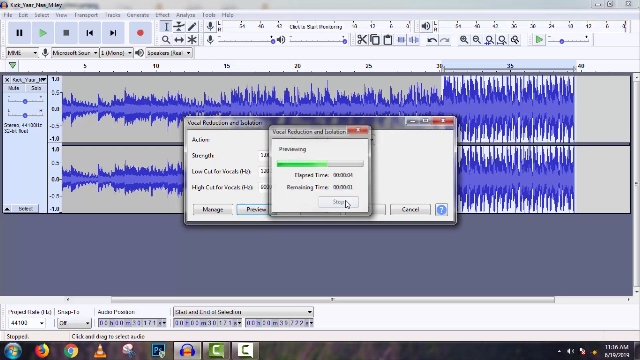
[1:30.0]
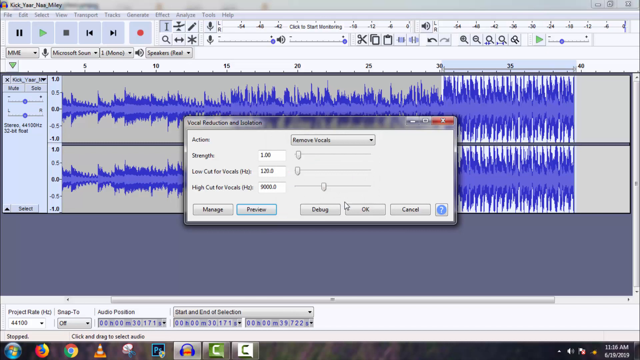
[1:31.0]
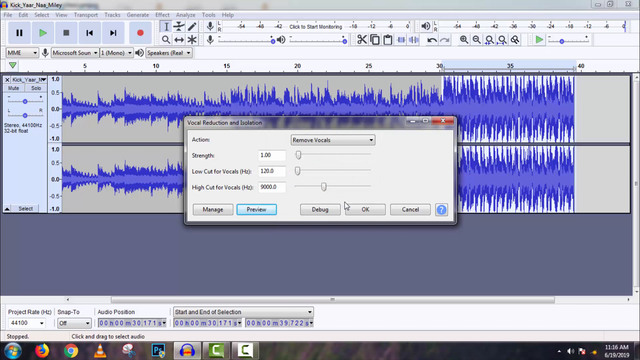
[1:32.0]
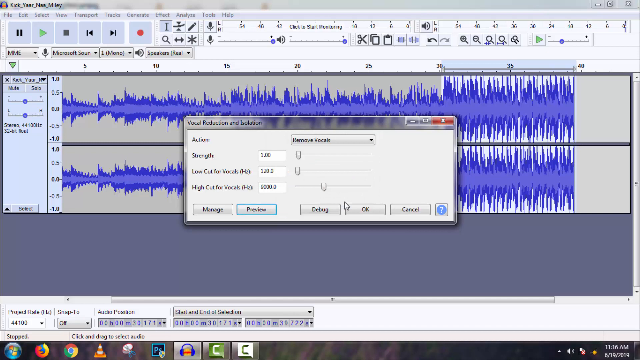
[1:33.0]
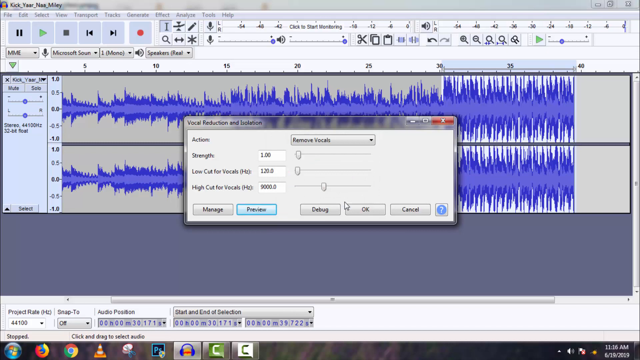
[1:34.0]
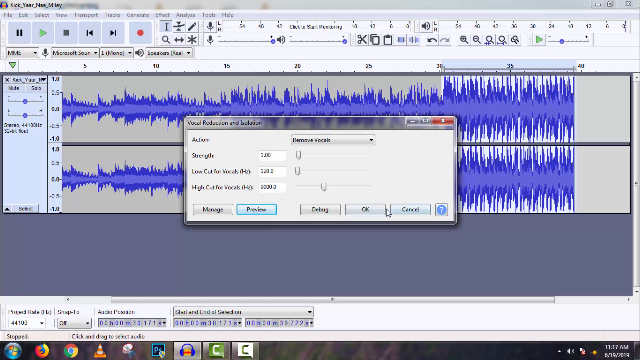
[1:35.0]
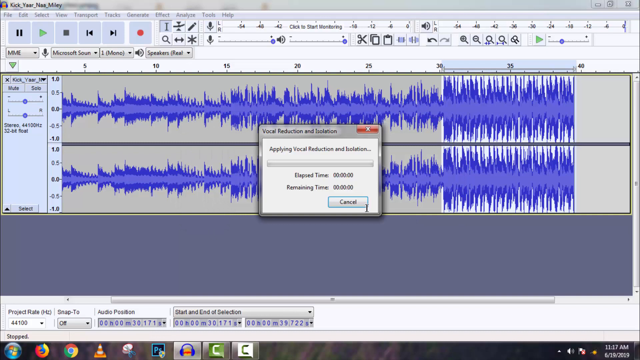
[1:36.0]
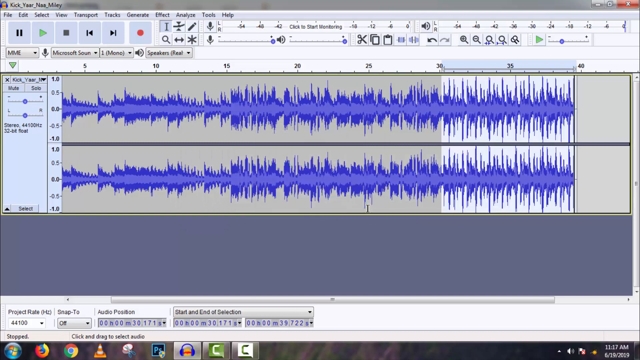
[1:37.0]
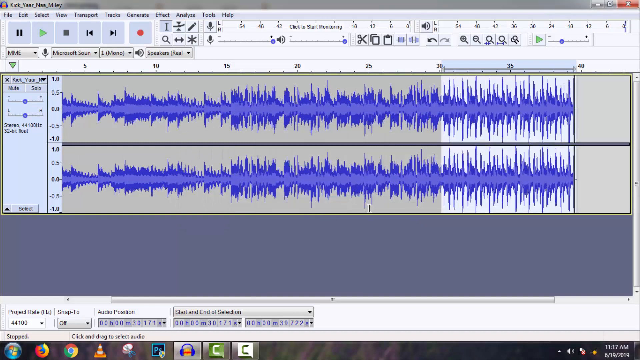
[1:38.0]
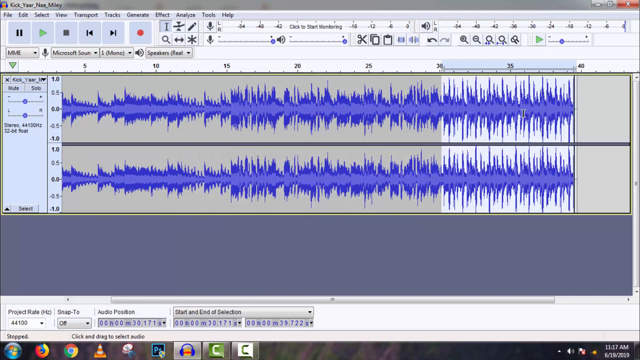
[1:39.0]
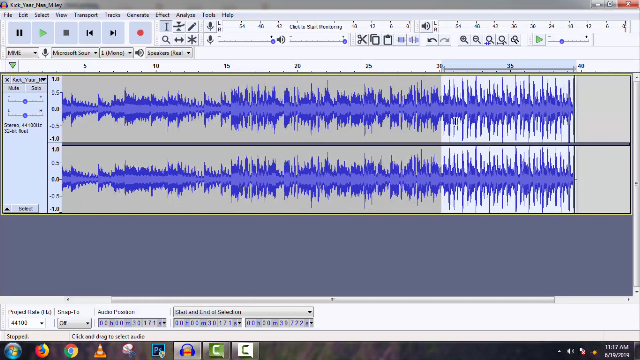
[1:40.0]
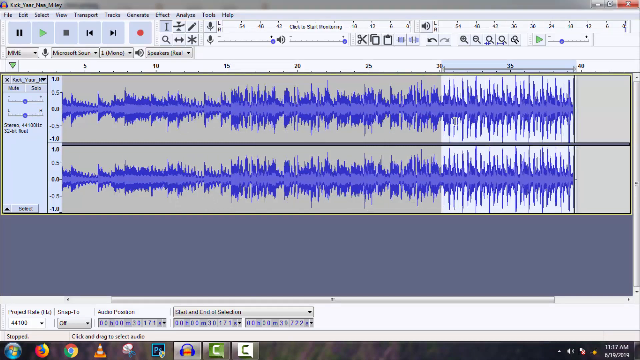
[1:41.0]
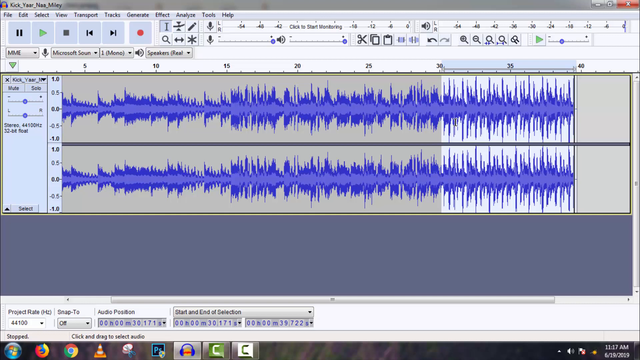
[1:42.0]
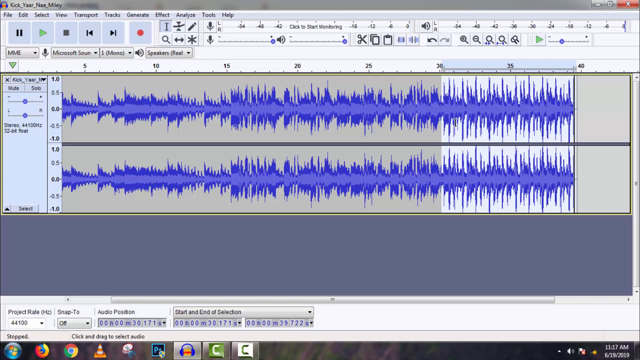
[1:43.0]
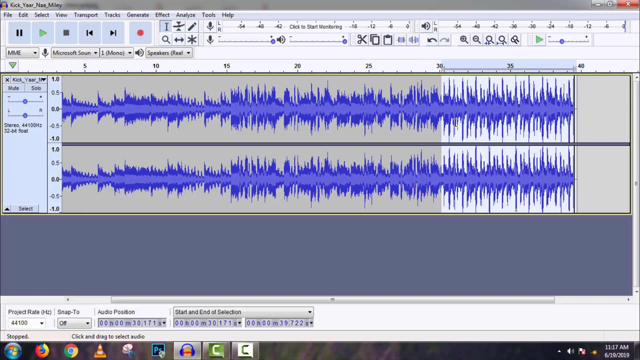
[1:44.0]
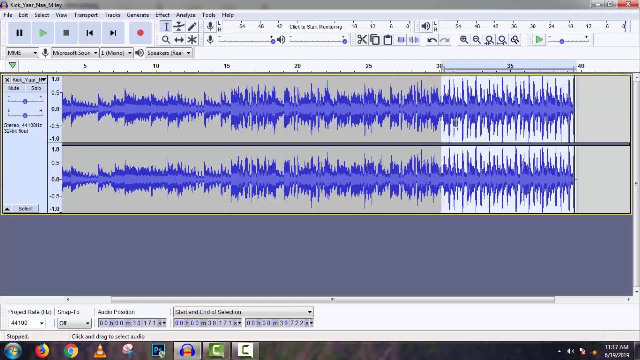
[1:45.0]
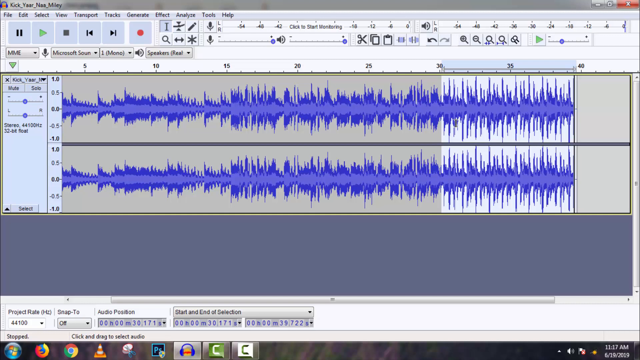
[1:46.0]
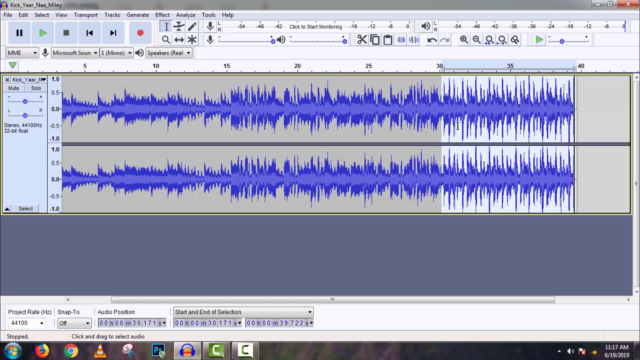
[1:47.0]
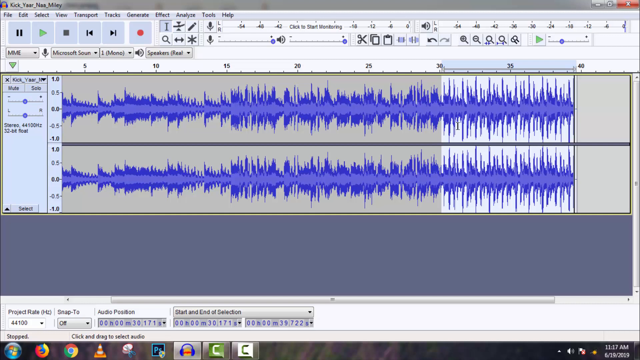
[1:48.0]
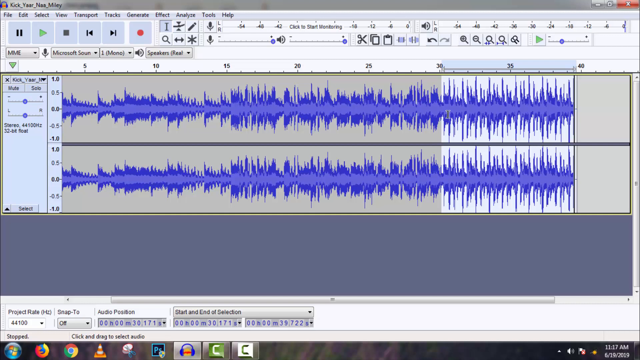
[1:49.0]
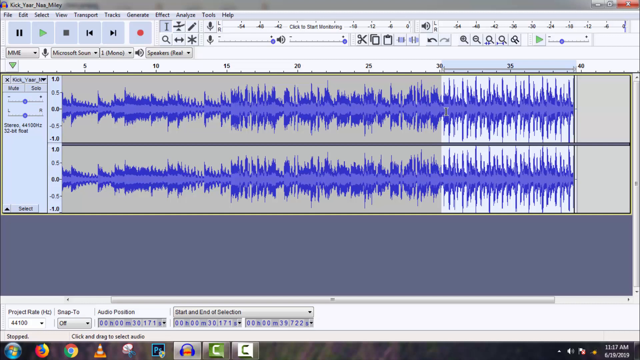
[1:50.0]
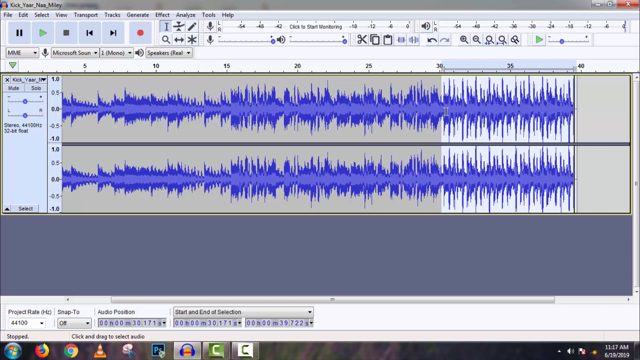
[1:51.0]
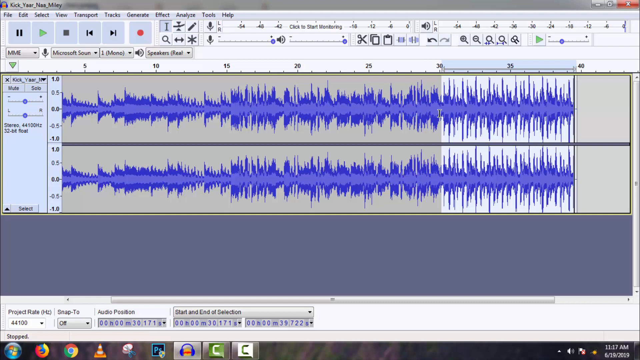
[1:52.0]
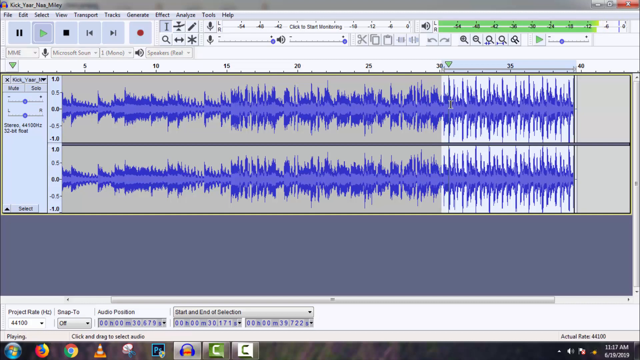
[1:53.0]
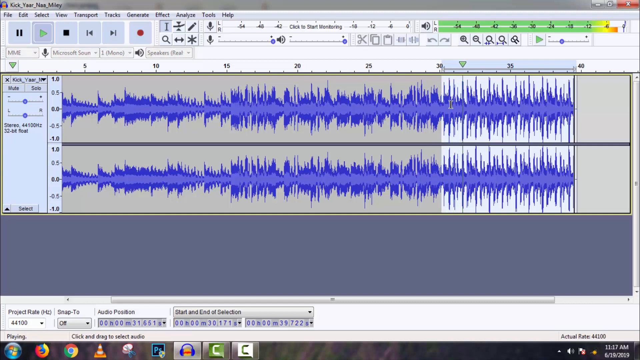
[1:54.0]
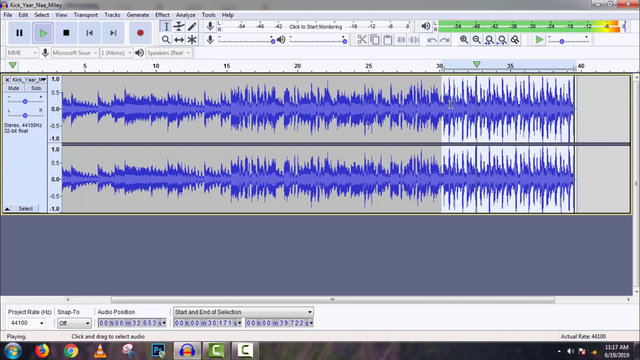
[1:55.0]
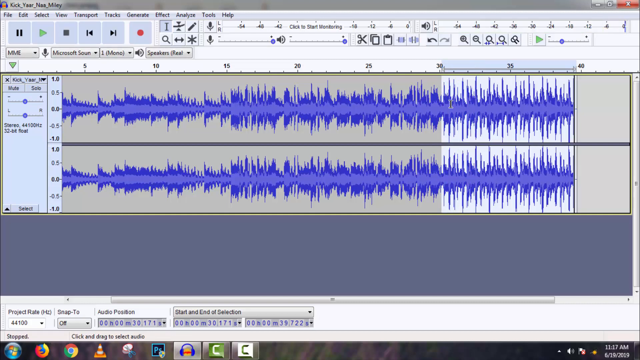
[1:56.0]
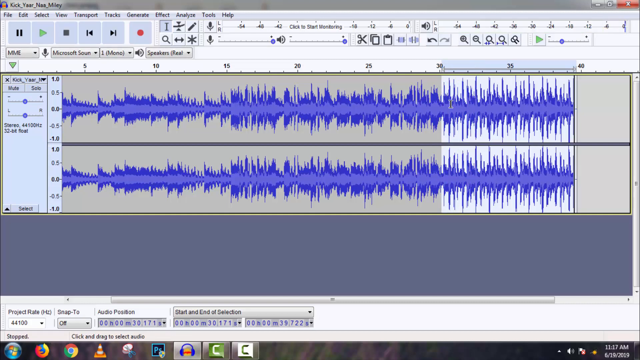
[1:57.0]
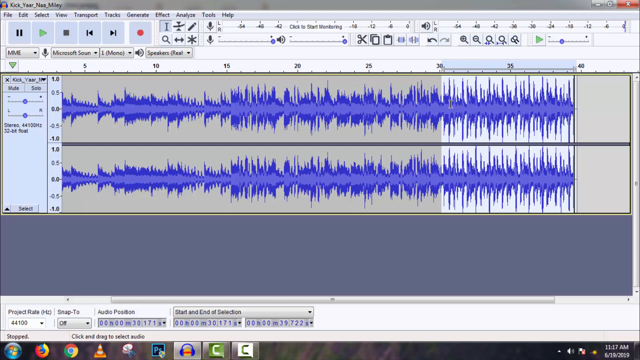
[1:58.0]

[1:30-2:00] The vocal reduction and isolation preview is still running, with the elapsed time showing what looks like four seconds and the remaining time what looks like one second. The vocal reduction is then accepted as the person clicks okay. Nothing seems to be playing, but the sound waves remain on screen in the editing application.